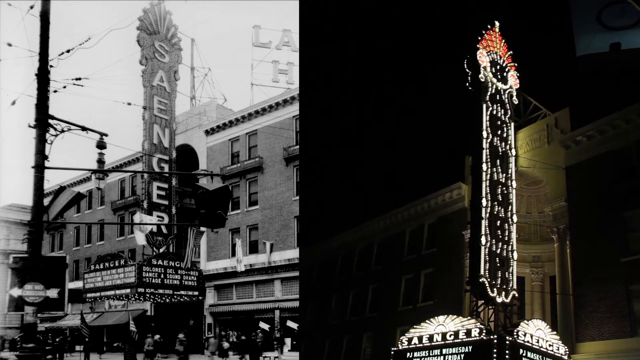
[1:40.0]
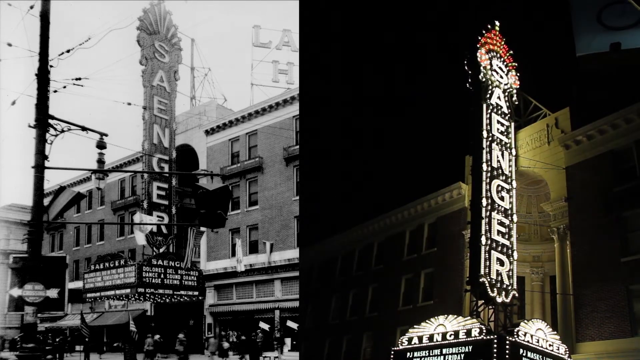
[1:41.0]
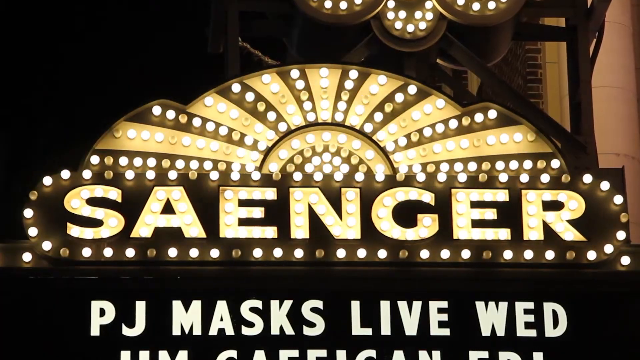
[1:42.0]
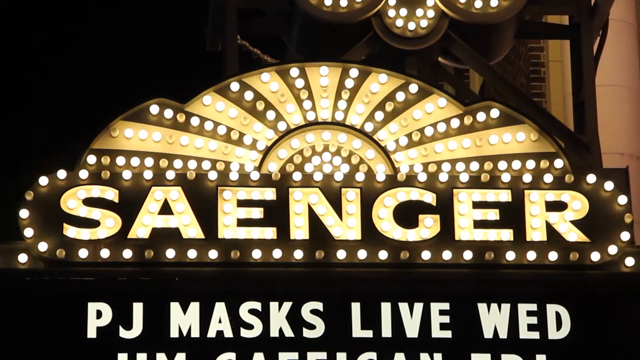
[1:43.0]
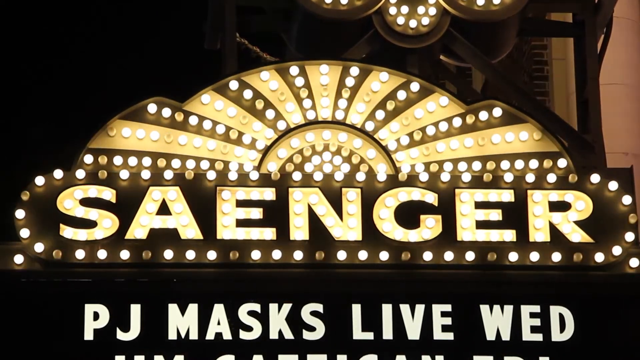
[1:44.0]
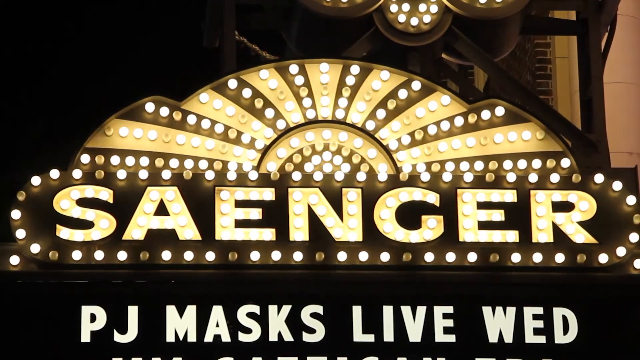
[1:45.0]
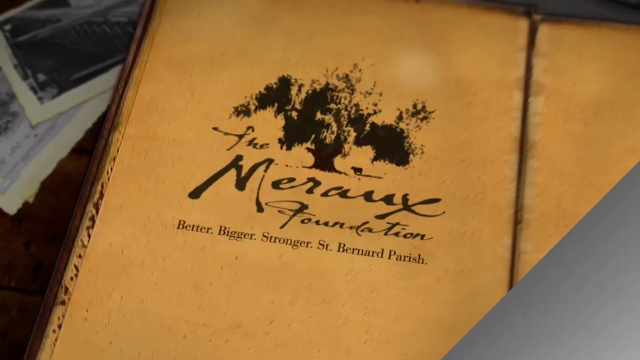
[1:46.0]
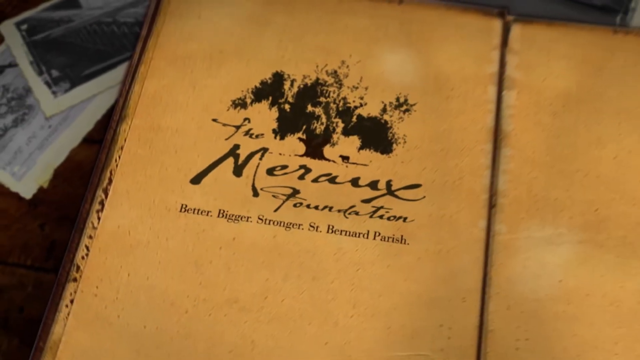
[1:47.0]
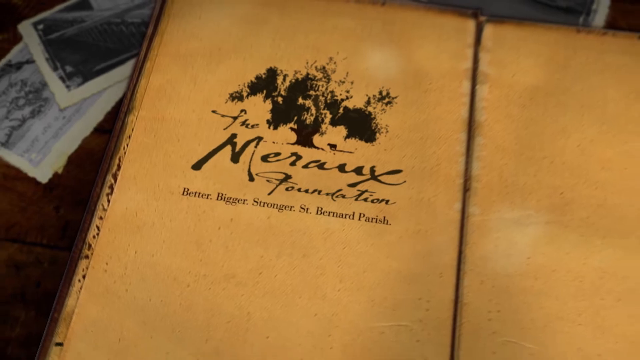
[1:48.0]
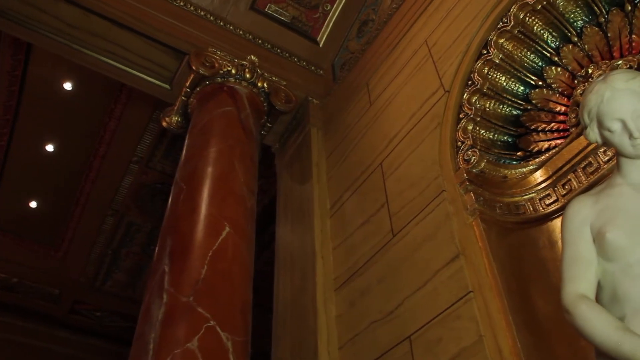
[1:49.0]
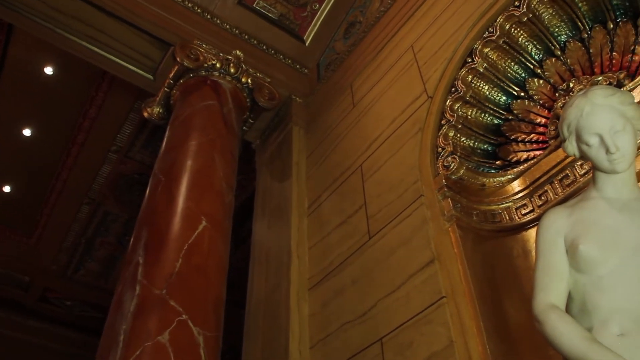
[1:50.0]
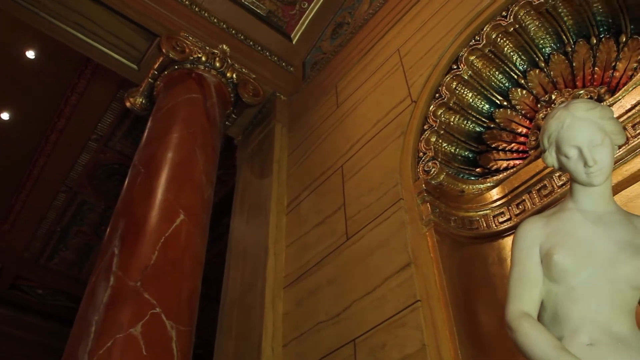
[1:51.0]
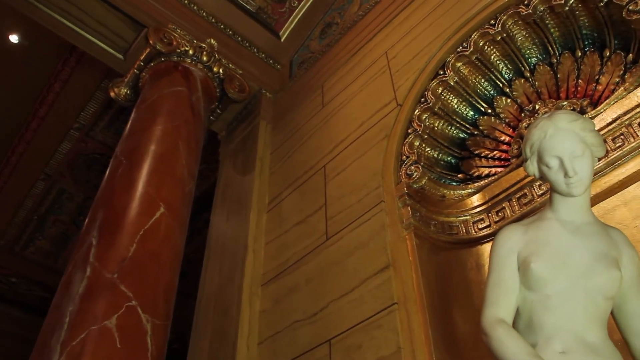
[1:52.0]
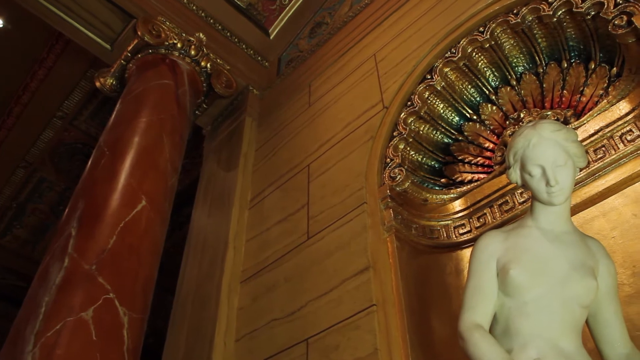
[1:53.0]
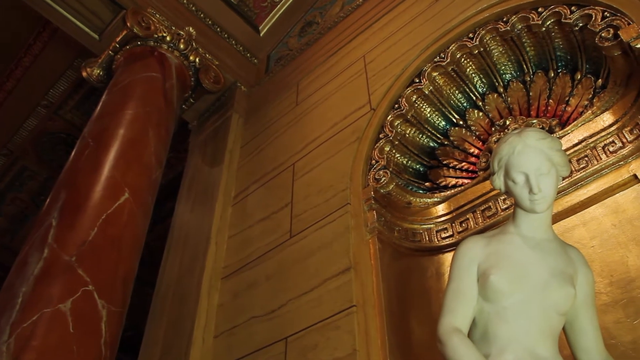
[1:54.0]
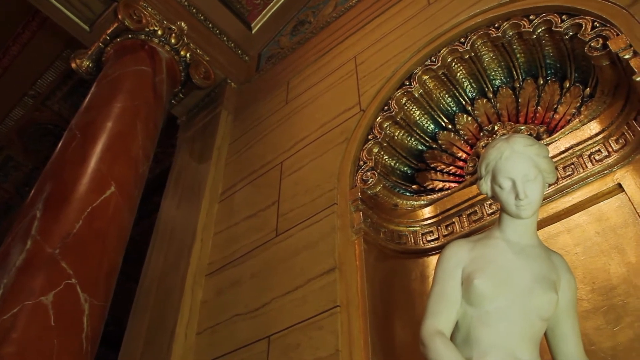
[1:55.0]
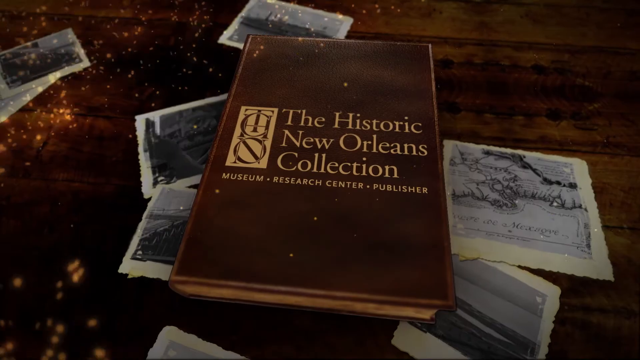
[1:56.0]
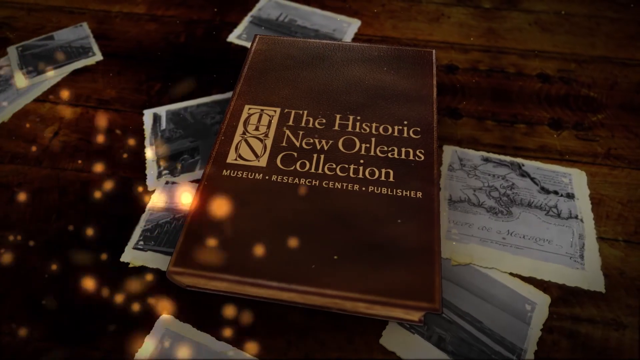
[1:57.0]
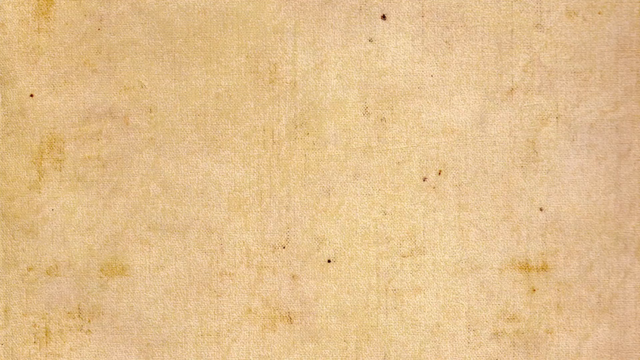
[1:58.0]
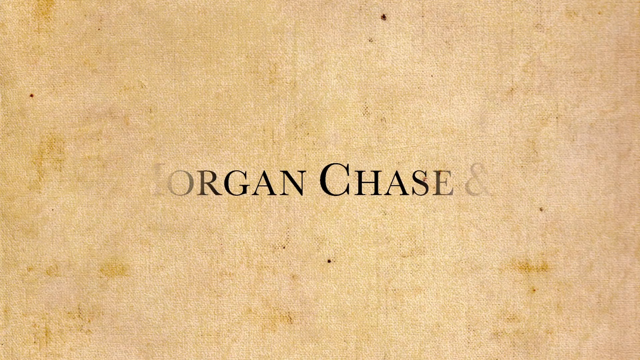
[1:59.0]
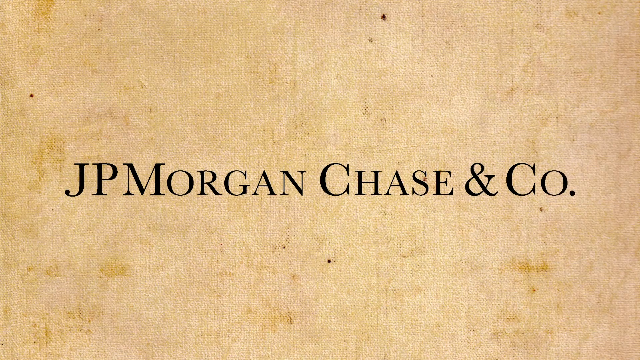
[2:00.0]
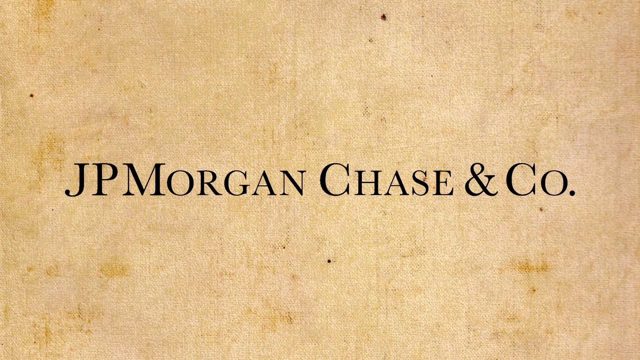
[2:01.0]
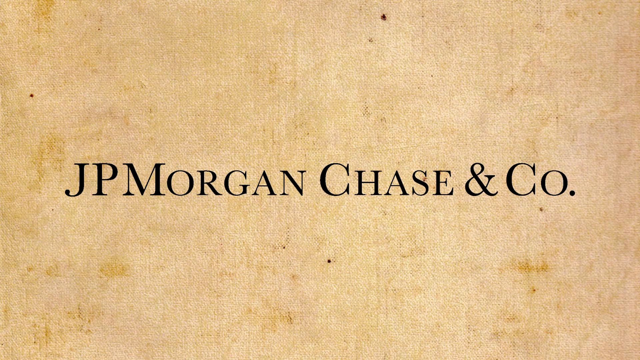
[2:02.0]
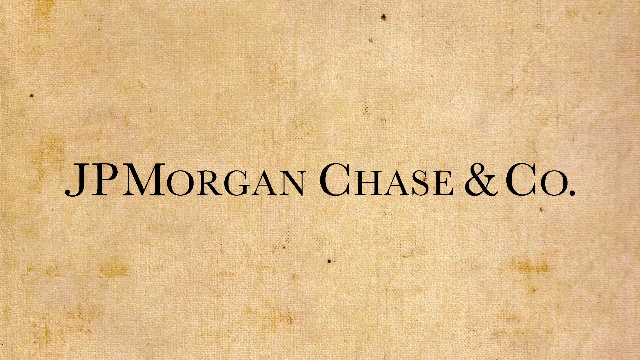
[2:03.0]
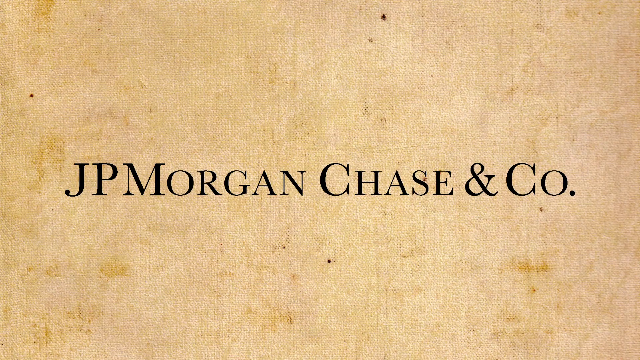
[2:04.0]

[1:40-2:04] Pictures of the Saenger sign appear side by side: on the left, a black-and-white picture taken outside the Saenger building; on the right, the Saenger sign when it is dark outside, turning on as an LED sign that looks something like Christmas lights. Another LED sign reads "Saenger" with a different design, with "PJ Masks live Wed" underneath. The book appears again with the writing "Foundation," then "better, bigger, stronger, St. Barnard Parish." Back inside the theatre are sculptures, including a woman who does not look like she is dressed. Finally, the outside of the book reads "the Historic New Orleans Collection, Museum, Research Center, Publisher."